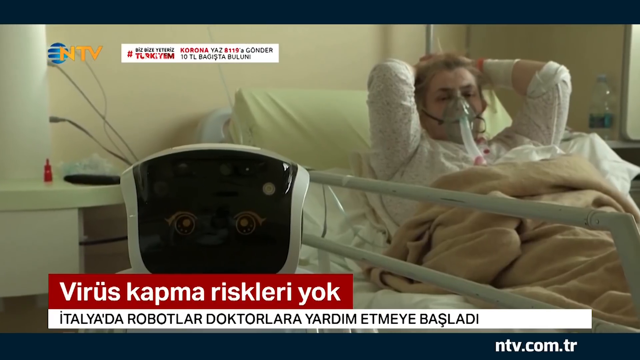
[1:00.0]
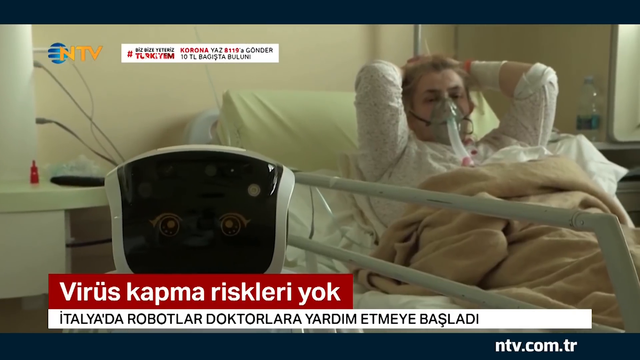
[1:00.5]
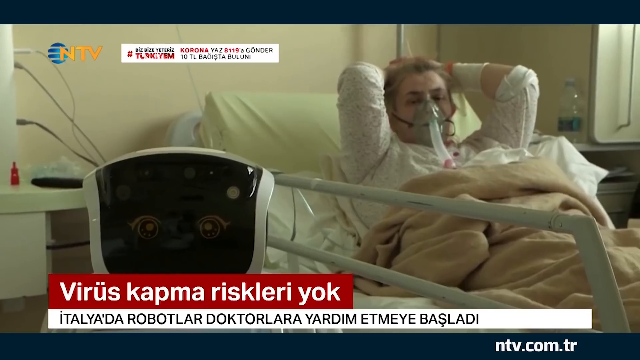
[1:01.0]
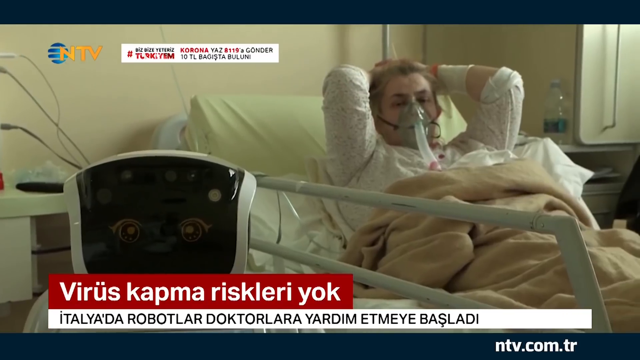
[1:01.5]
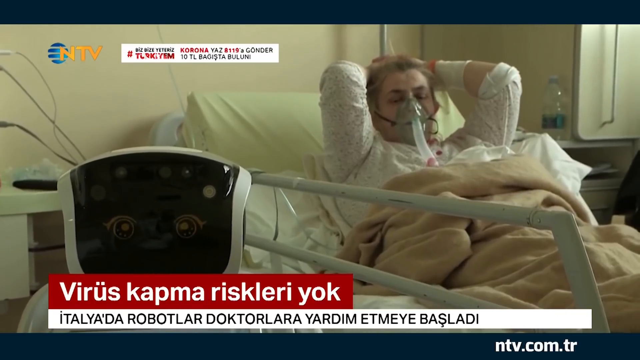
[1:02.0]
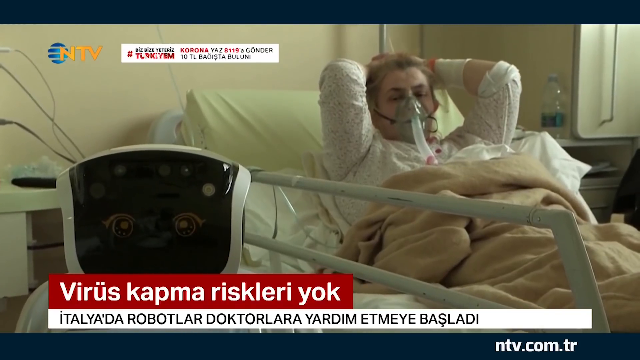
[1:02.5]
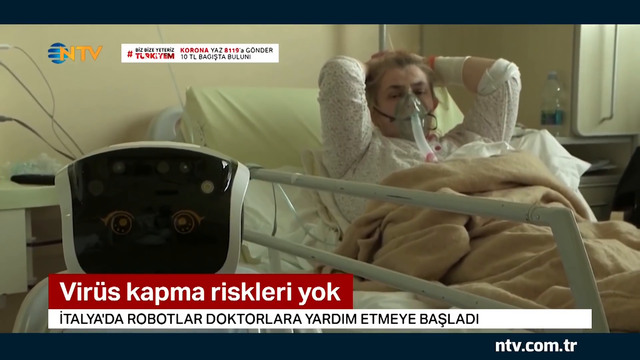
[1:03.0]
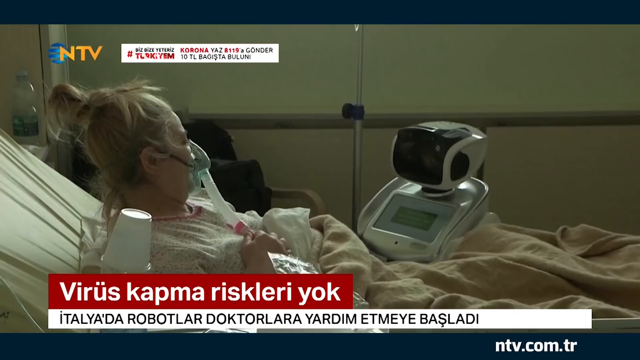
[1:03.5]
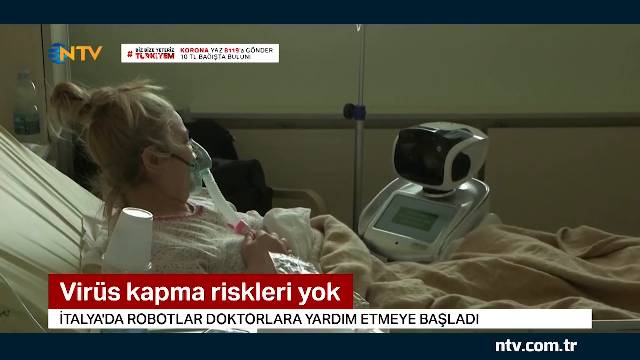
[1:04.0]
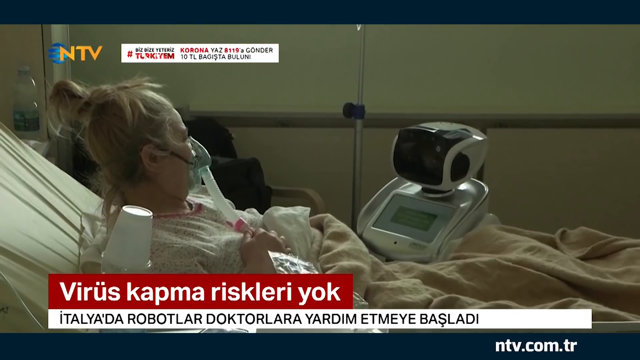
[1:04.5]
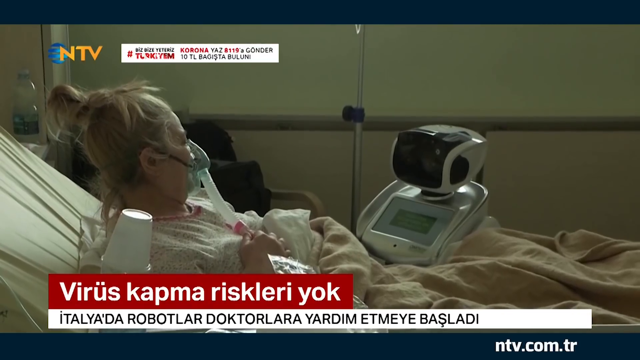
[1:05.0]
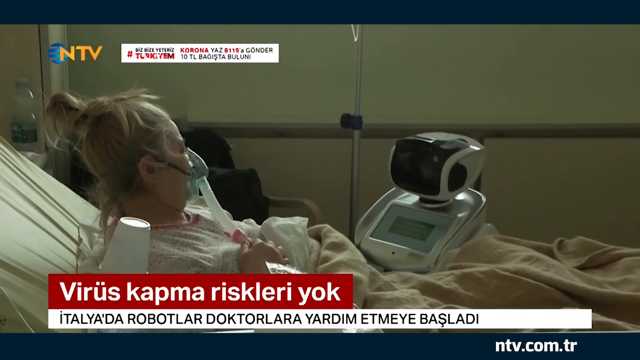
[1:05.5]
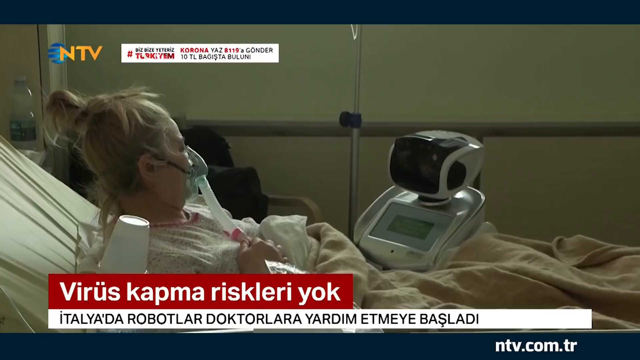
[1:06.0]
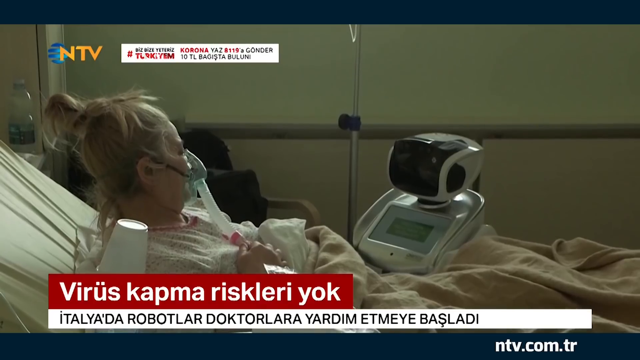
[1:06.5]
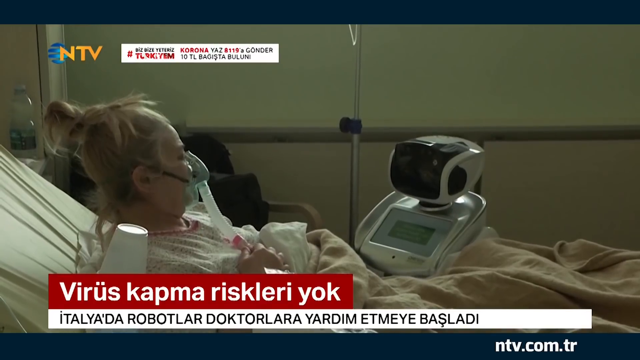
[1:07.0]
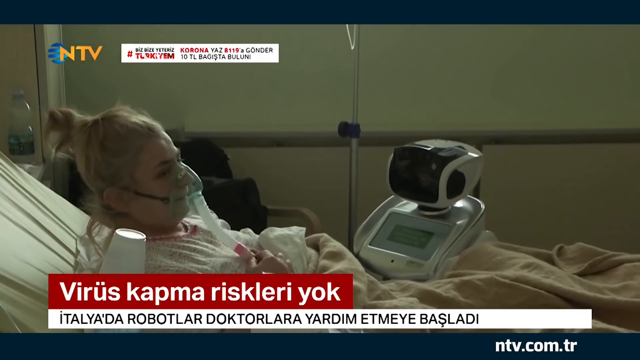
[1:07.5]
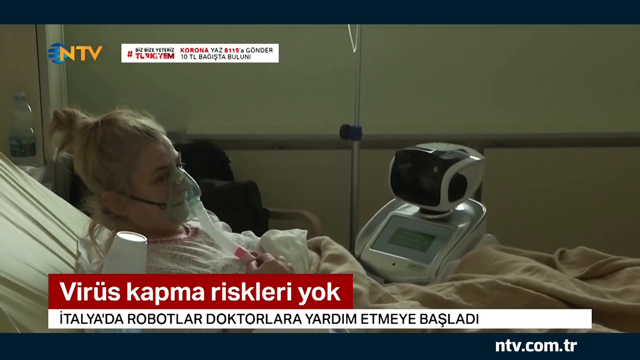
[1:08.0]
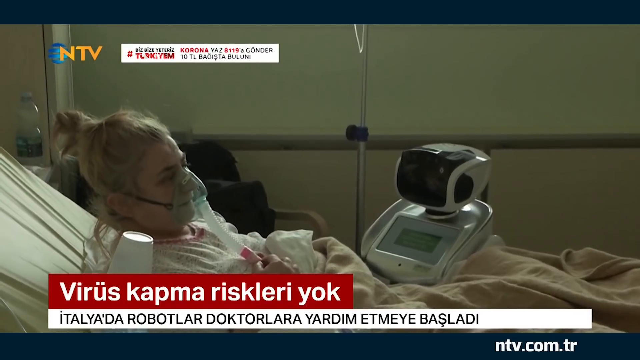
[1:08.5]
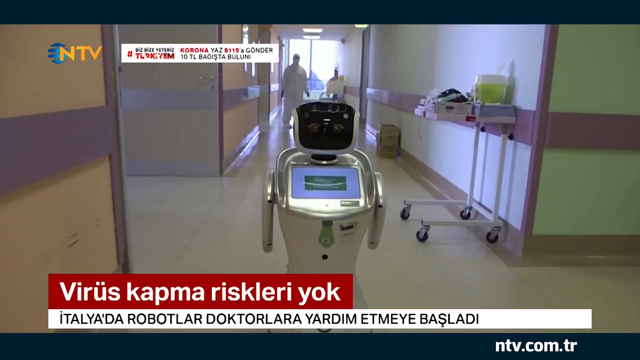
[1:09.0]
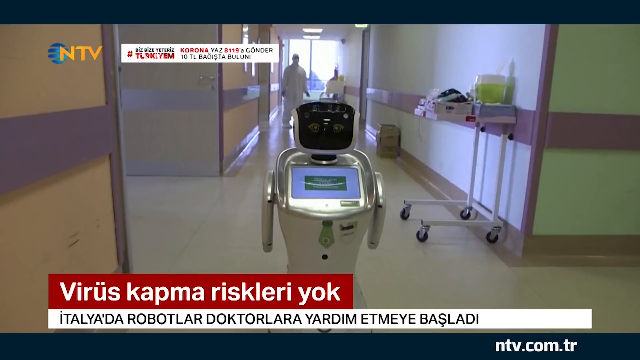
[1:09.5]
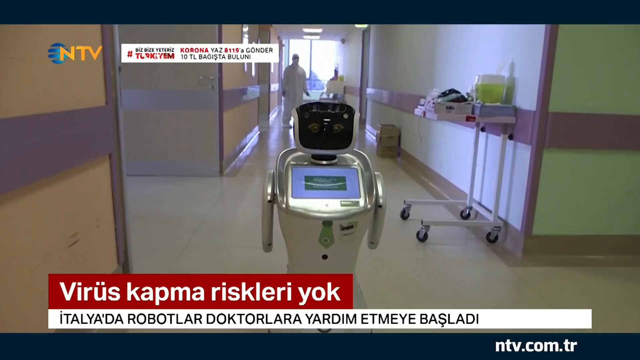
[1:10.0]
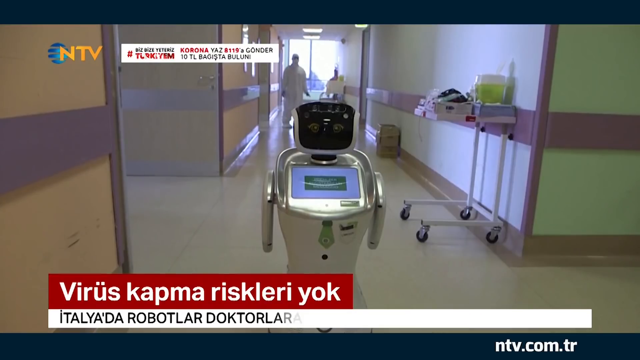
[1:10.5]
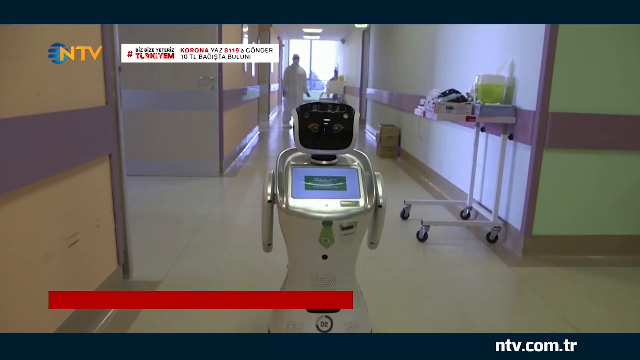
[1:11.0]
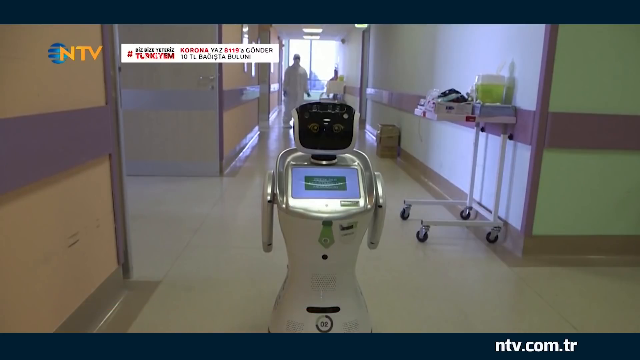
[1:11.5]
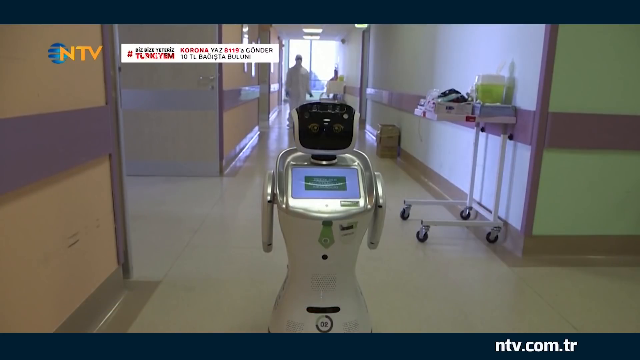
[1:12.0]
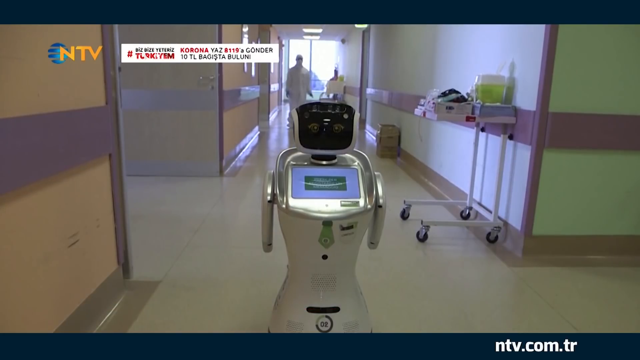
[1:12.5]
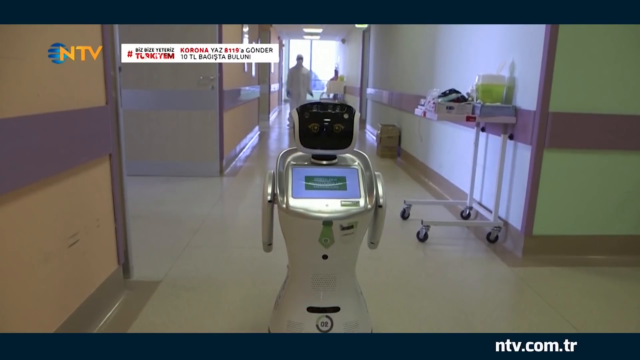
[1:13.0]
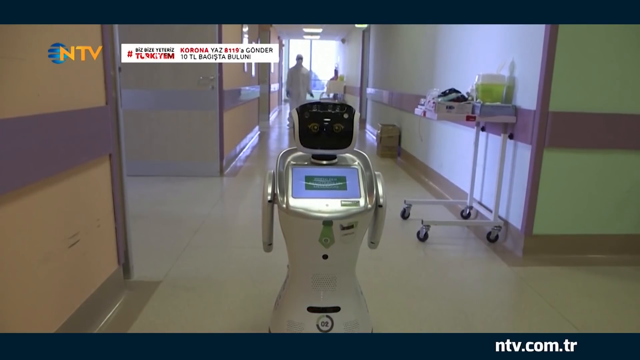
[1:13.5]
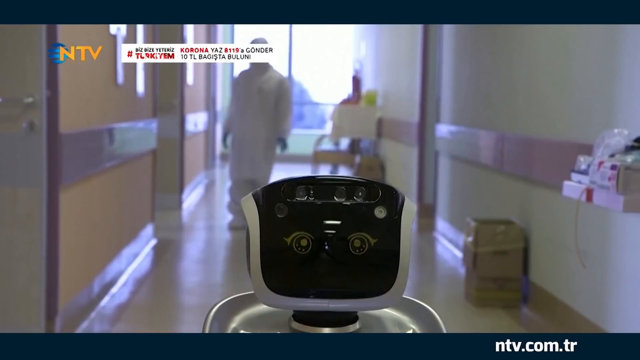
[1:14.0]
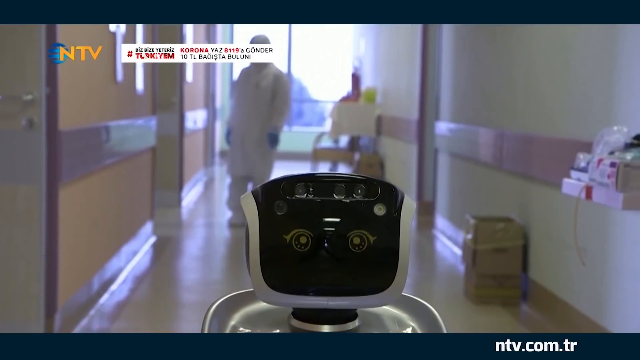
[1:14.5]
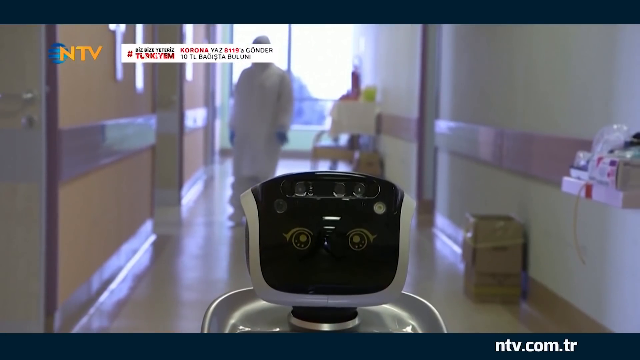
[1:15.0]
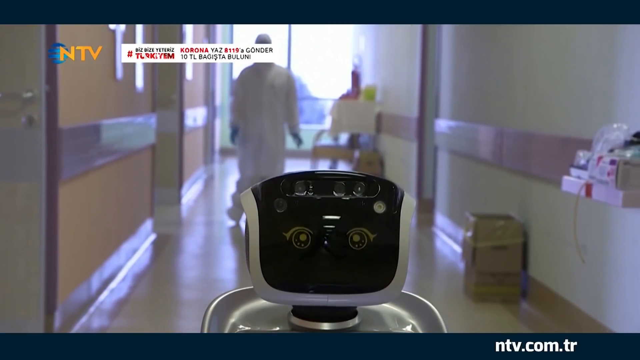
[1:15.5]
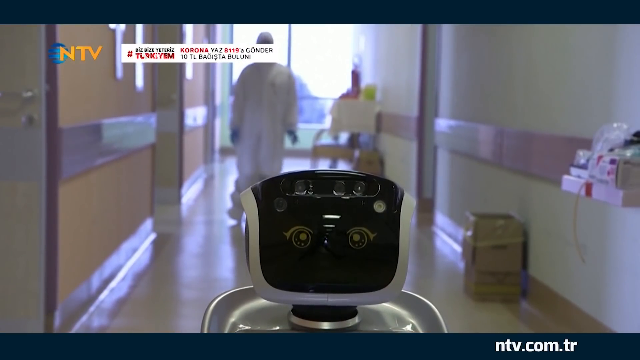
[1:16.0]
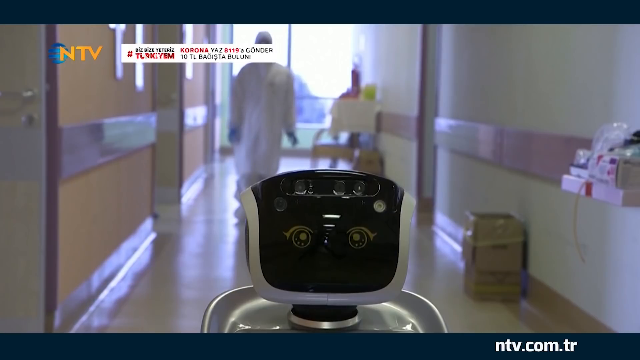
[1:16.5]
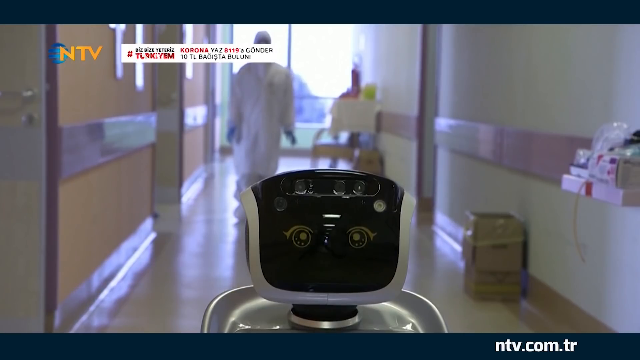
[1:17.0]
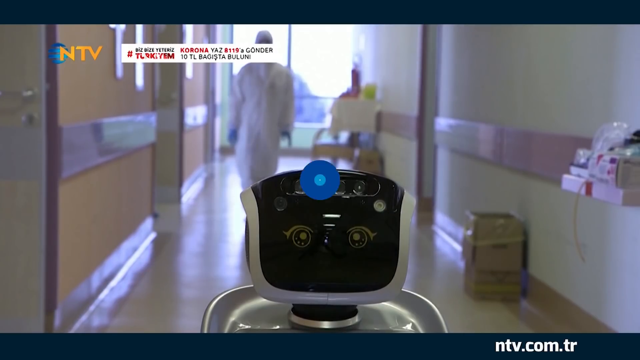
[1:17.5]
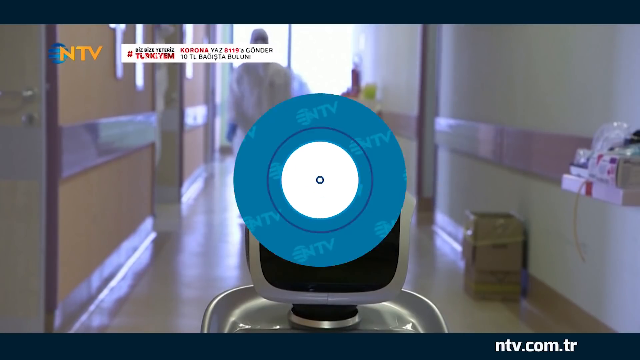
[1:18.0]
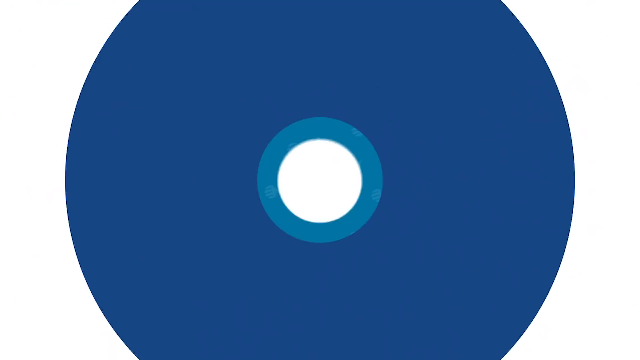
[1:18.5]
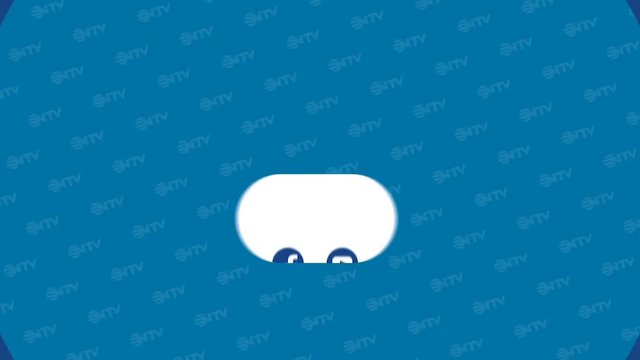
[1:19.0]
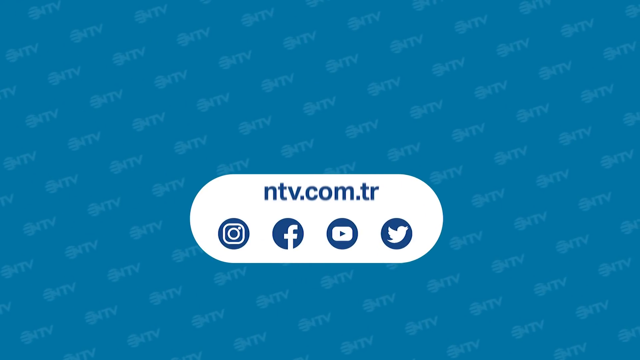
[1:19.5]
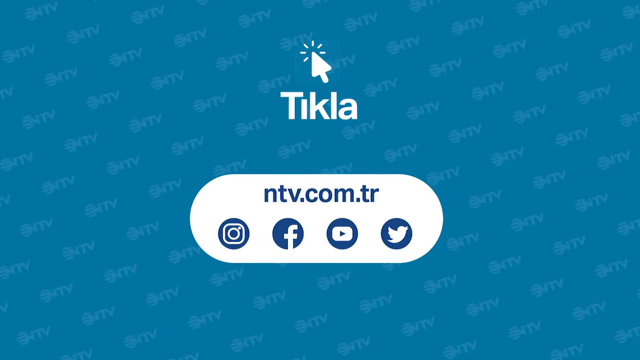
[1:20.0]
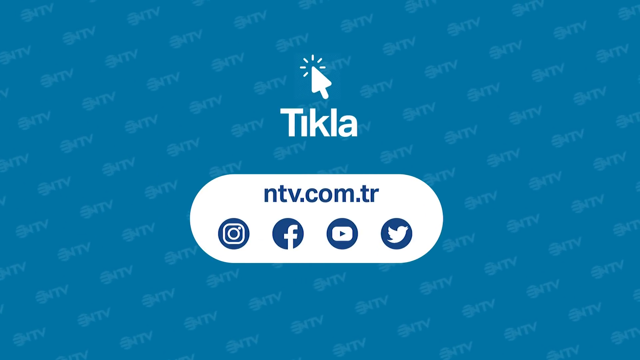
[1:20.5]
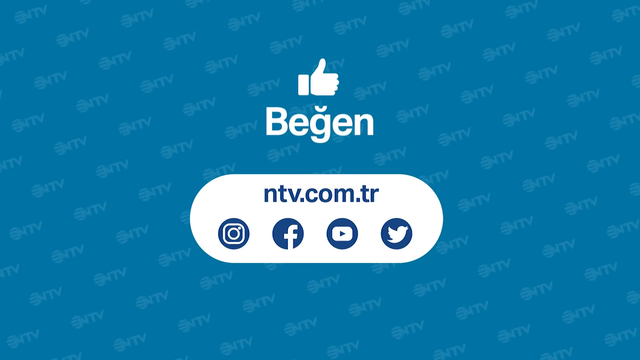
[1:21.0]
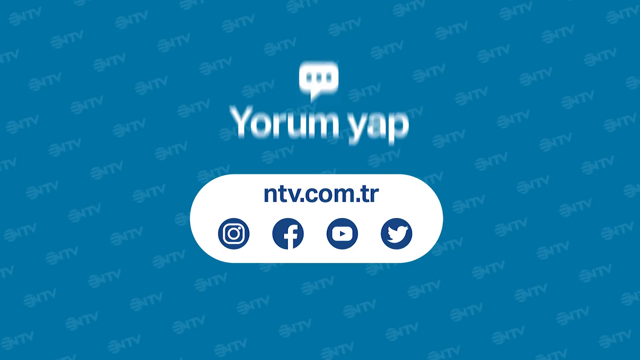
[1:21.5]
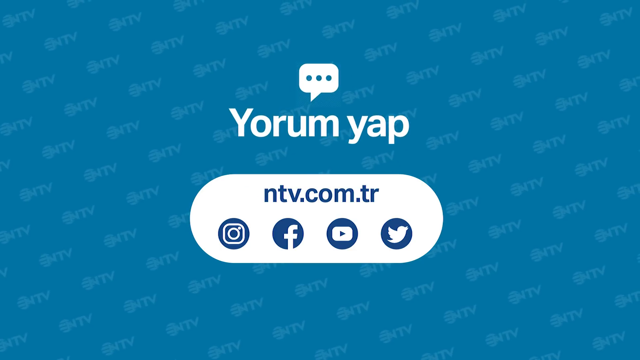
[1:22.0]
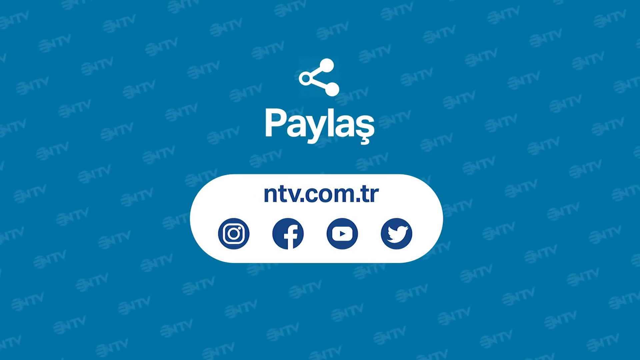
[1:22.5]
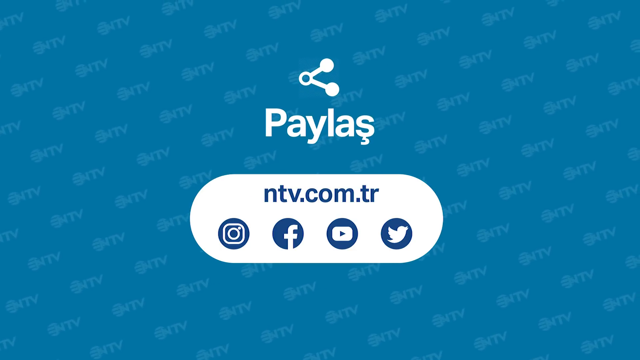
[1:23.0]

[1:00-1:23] A robot walks with a person wearing a white suit. Fine print in red and black runs across the top of the screen, too small and distant to read. They walk up and down in a hospital. In another scene, a man lies in a hospital bed, with some type of mask over his face that appears to be helping him breathe. The robot has eyes; it is apparently designed to keep company with patients who lie in hospital and are unable to move. Toward the end of the video, a man wearing a blue shirt, with a mask over his face, addresses the camera.